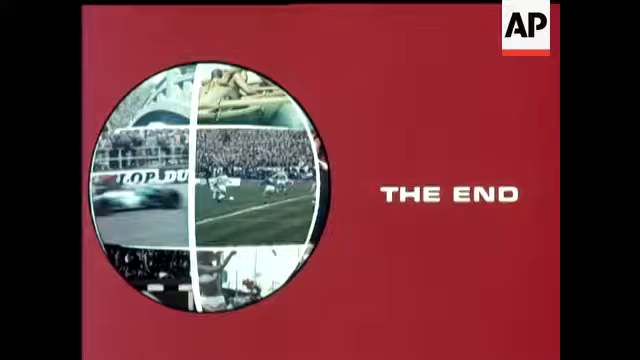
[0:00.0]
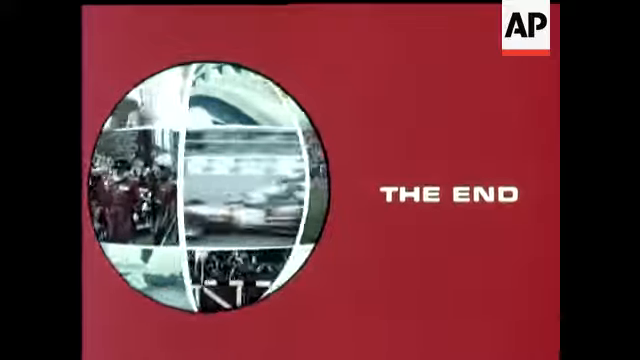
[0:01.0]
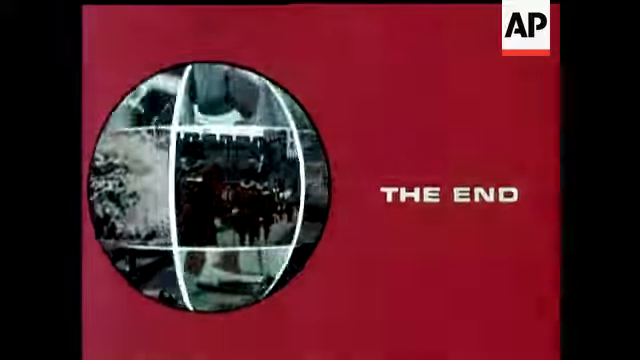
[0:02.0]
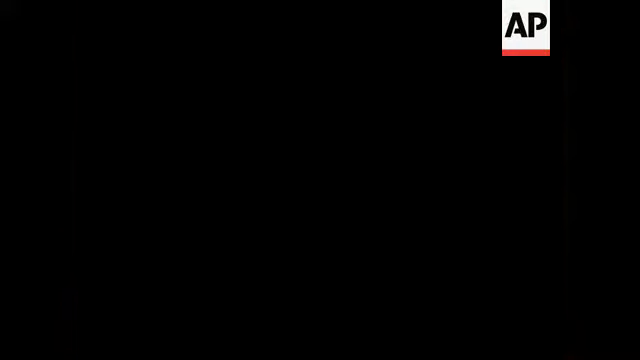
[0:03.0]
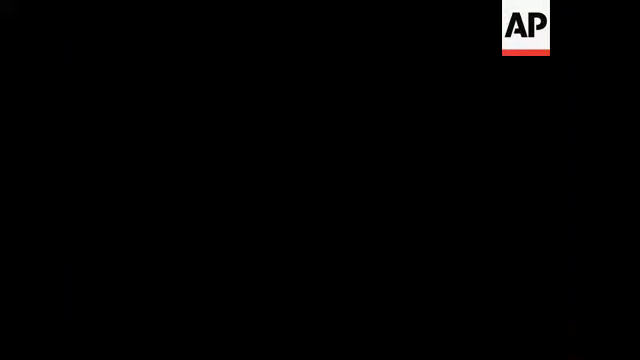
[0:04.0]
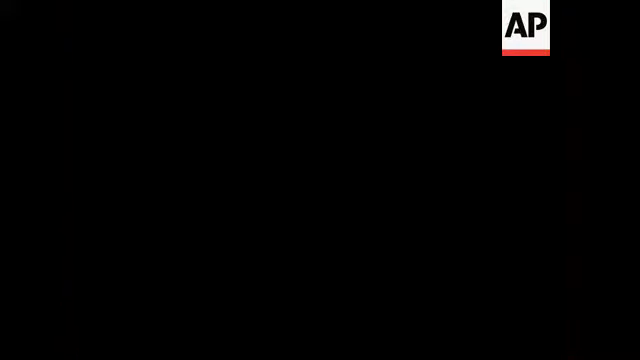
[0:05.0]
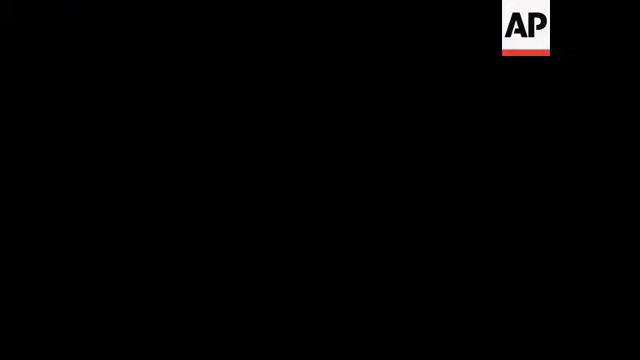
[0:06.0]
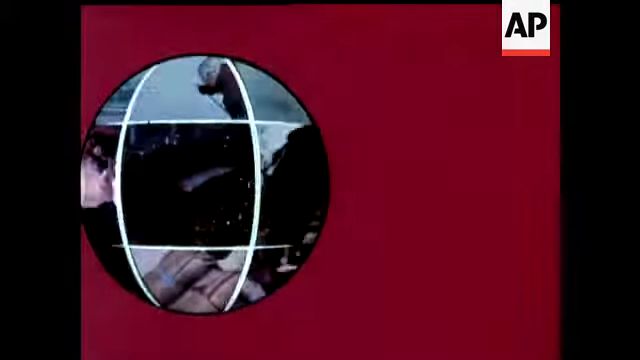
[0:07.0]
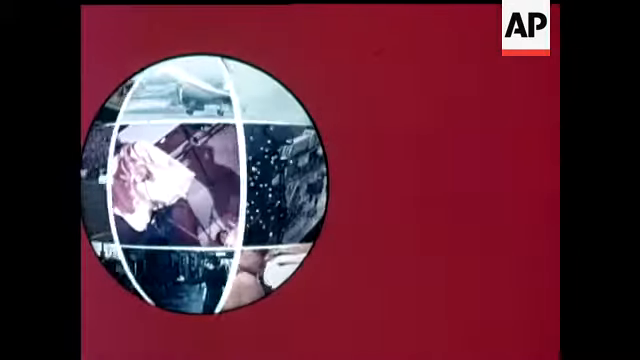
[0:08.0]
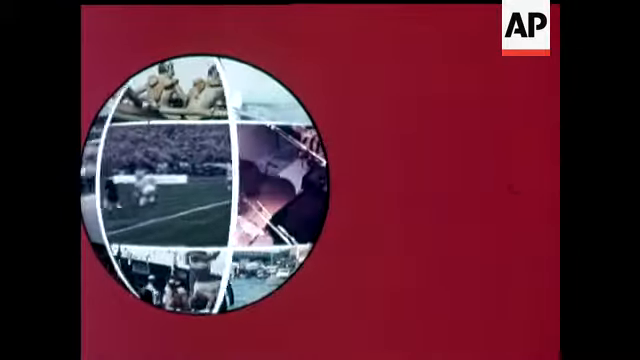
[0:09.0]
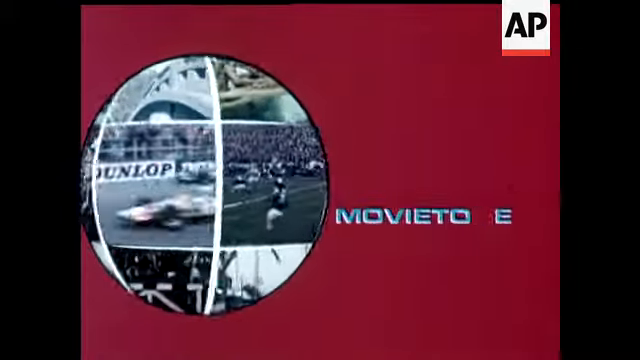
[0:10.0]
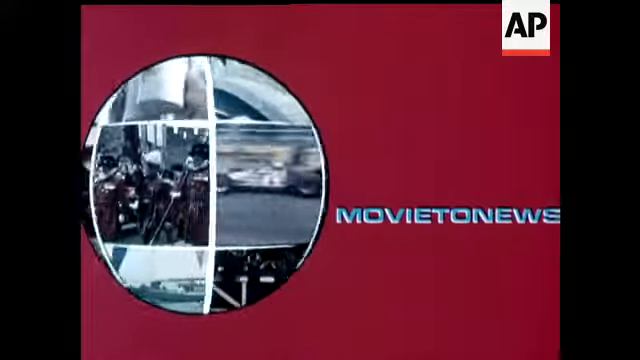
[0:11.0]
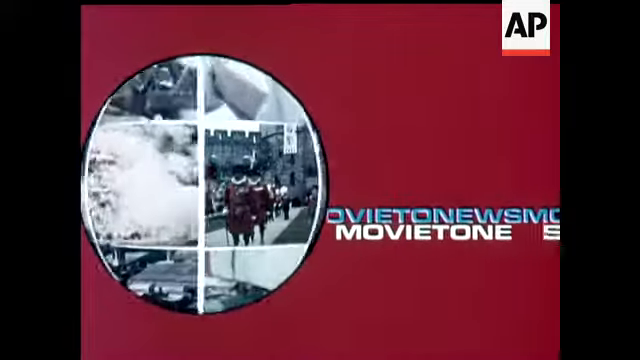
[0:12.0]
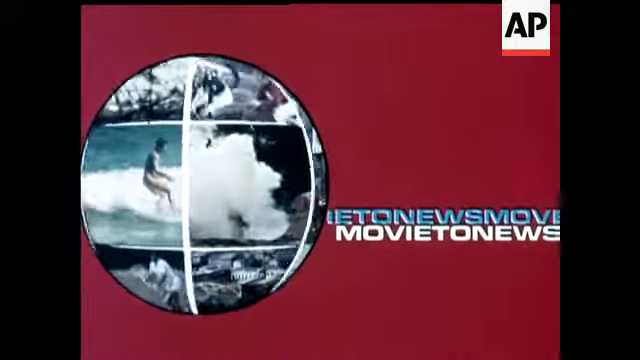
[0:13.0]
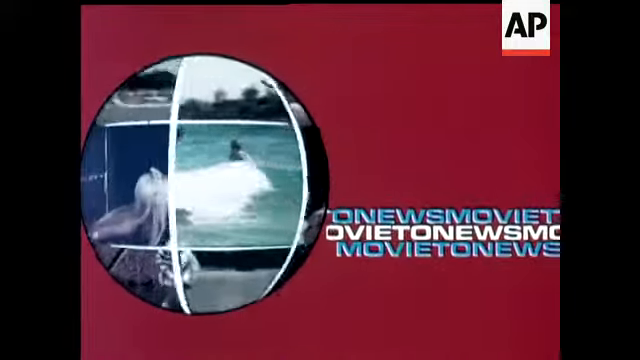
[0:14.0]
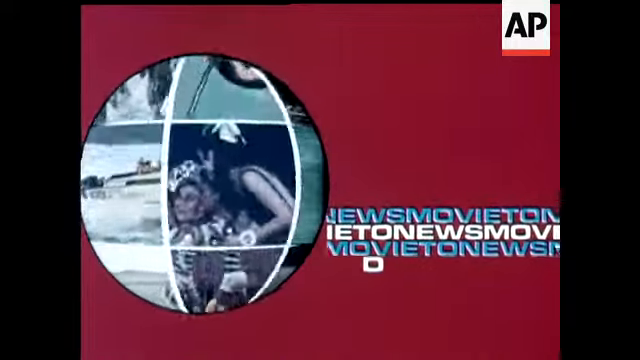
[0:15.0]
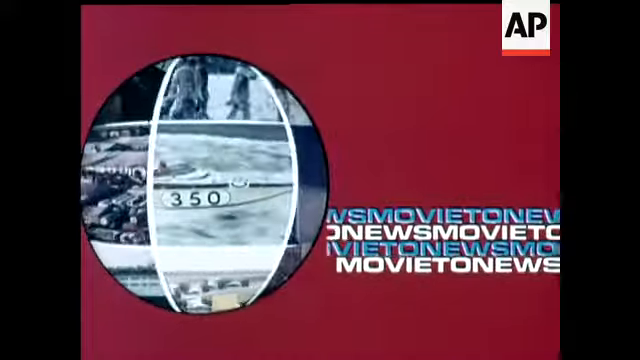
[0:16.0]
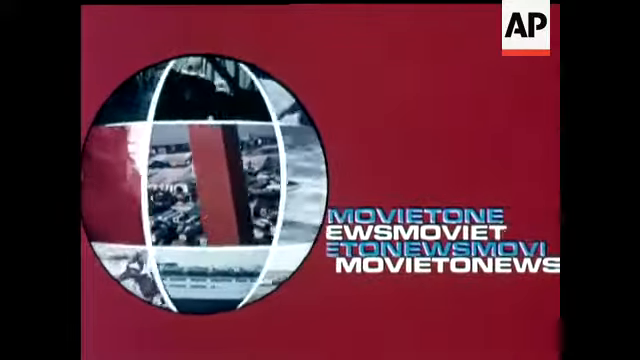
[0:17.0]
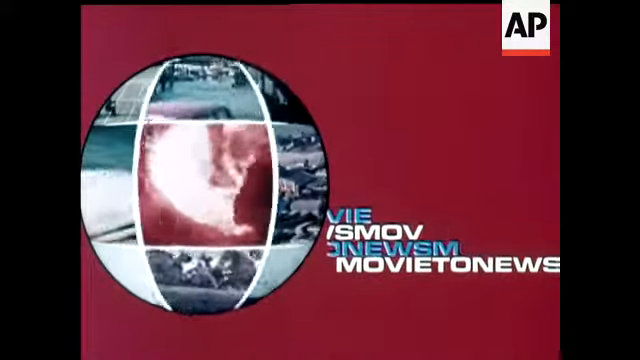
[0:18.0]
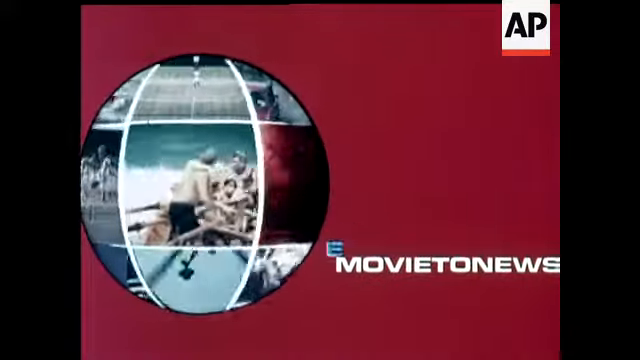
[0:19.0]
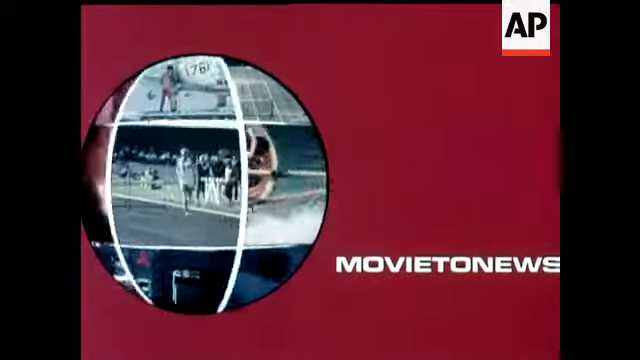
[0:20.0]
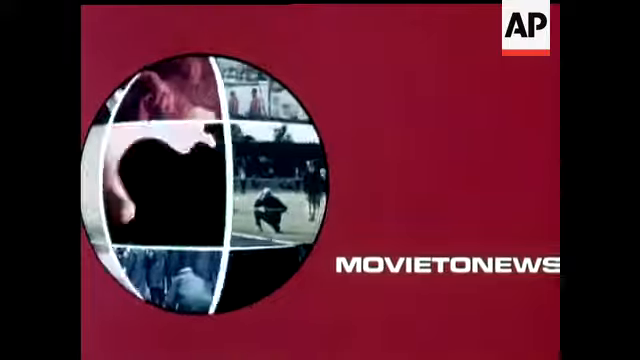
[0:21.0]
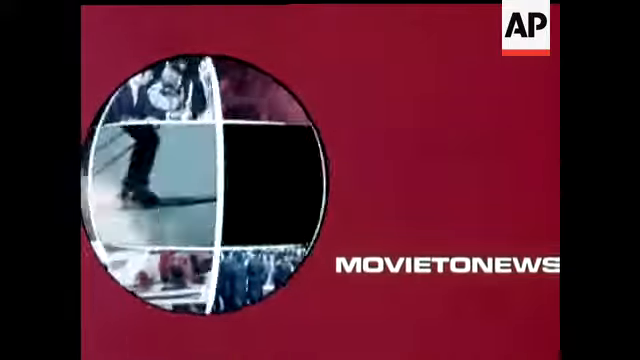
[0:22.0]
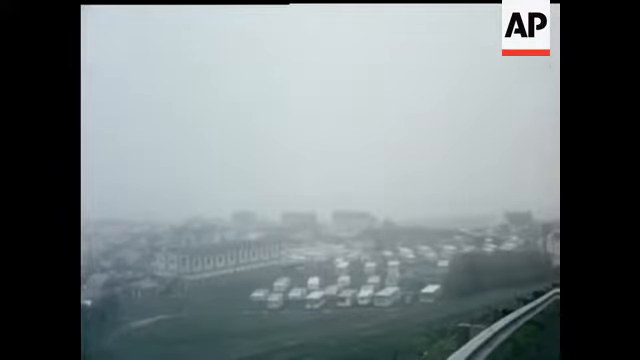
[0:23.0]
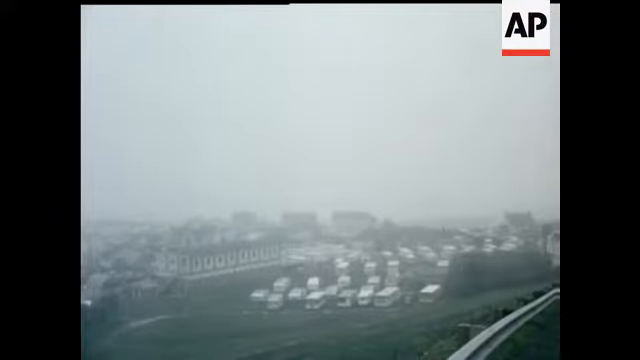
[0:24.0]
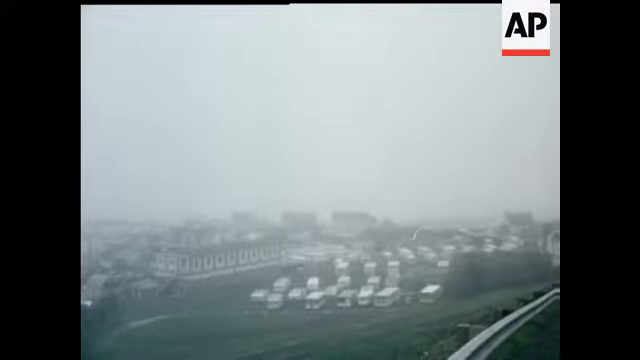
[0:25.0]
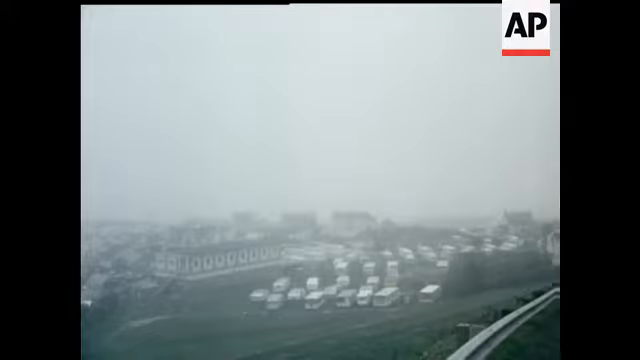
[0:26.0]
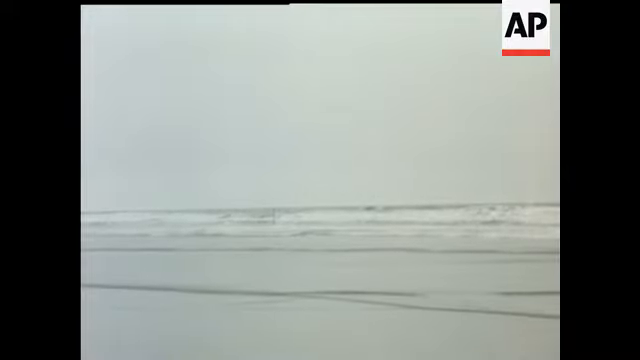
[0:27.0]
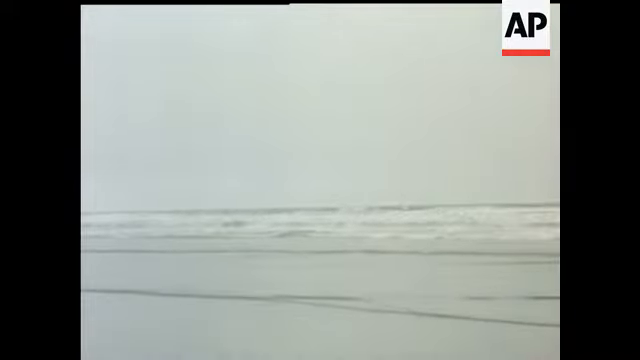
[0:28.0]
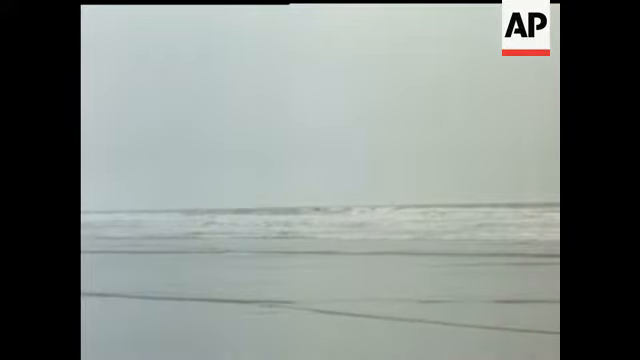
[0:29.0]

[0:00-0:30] A red screen shows "THE END" in white letters on the right, and on the left what looks like a spinning globe. Instead of water, continents or countries, the globe has a grid-like pattern with a different scene in each section, such as a Kings Guard, a football game, and a NASCAR race or a Le Mans race. In the top right, "AP" appears inside a white square with a red line along the bottom. The image disappears into a black screen, then the same spinning globe reappears with different videos or clips inside it. Four lines of text read "MOVIETONEWS"; the top and the middle are blue, and the second and the fourth are in white text. The text moves from right to left until only one "MOVIETONEWS" is visible. An overhead view then shows a field with a lot of what look like trailers or caravans; it is really foggy, and there are buildings. A body of water that looks like the ocean appears, followed by a lot of people spectating on the left side of the beach.